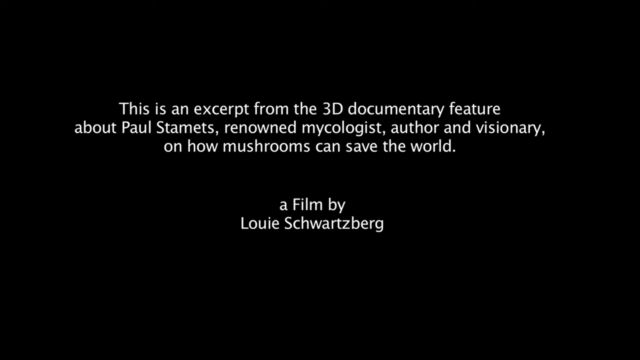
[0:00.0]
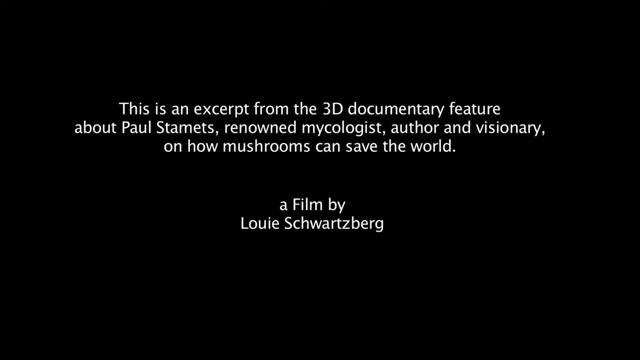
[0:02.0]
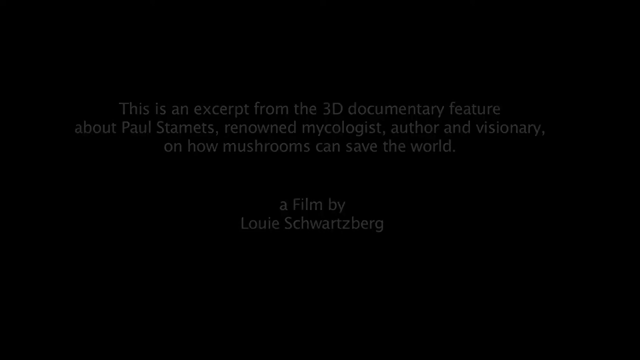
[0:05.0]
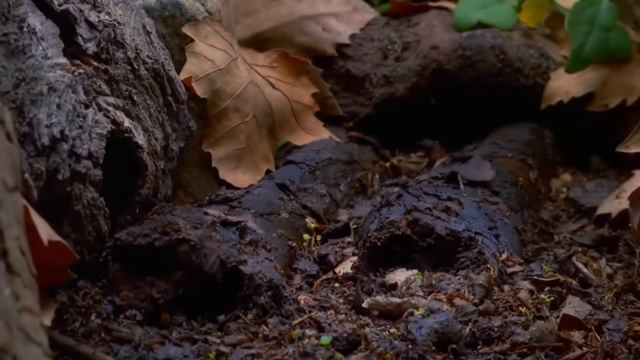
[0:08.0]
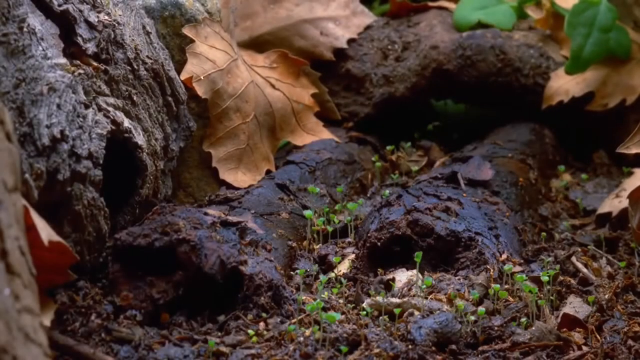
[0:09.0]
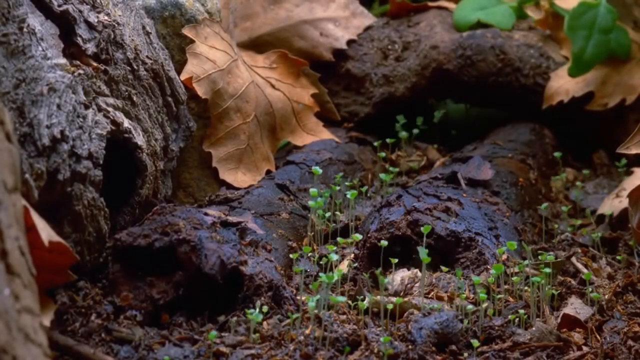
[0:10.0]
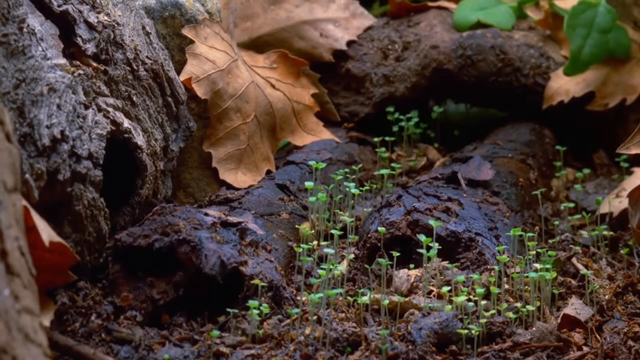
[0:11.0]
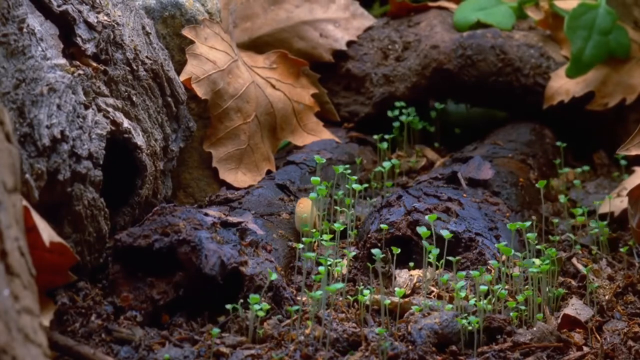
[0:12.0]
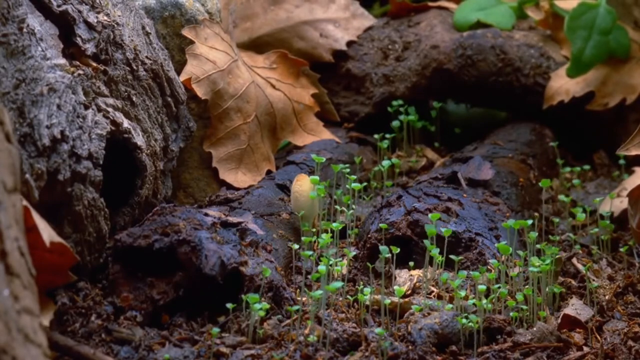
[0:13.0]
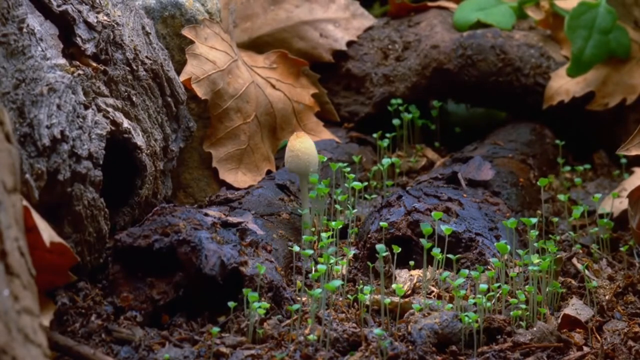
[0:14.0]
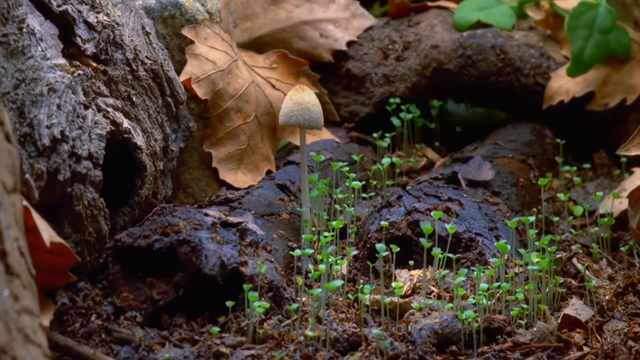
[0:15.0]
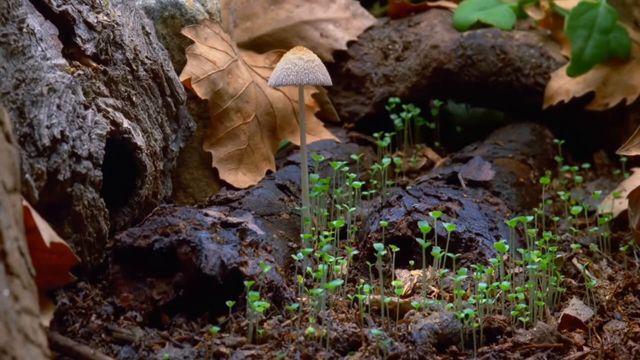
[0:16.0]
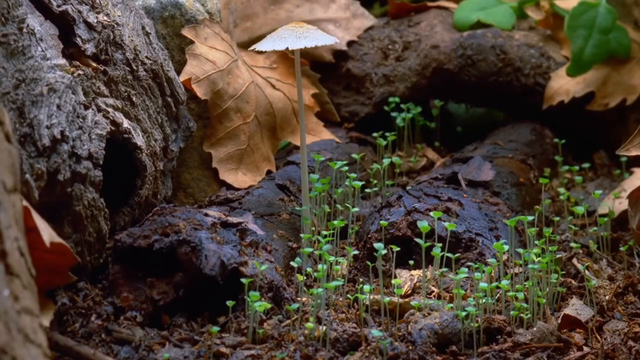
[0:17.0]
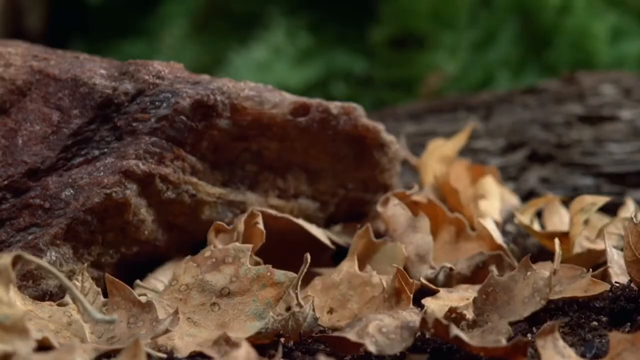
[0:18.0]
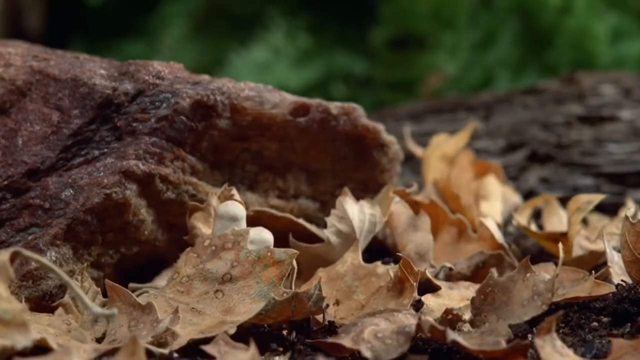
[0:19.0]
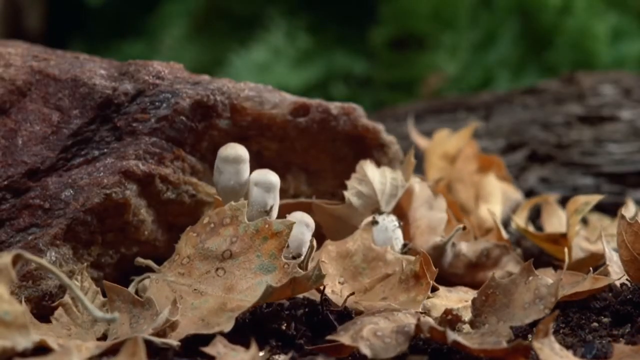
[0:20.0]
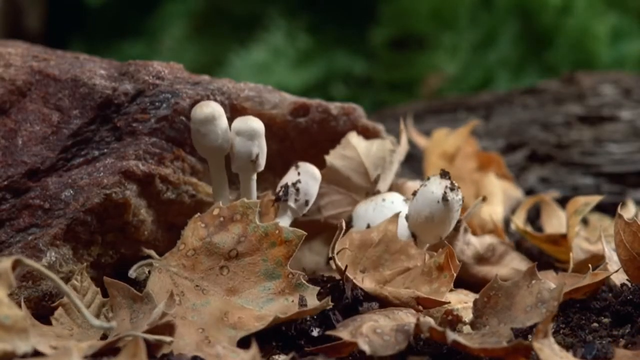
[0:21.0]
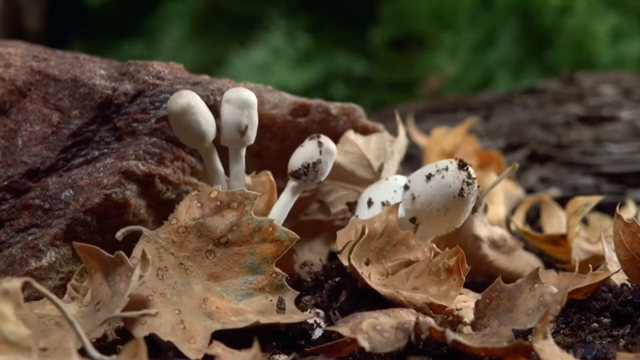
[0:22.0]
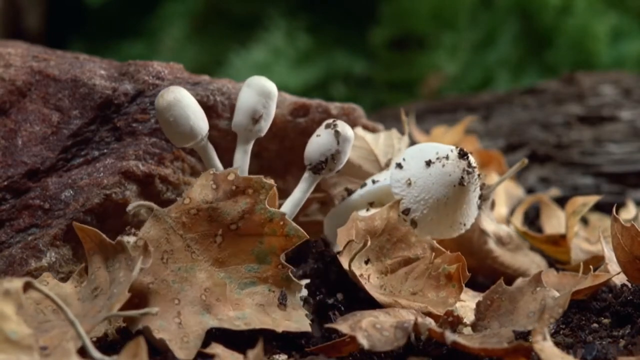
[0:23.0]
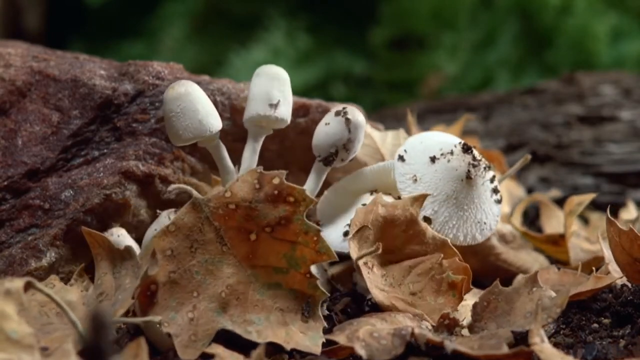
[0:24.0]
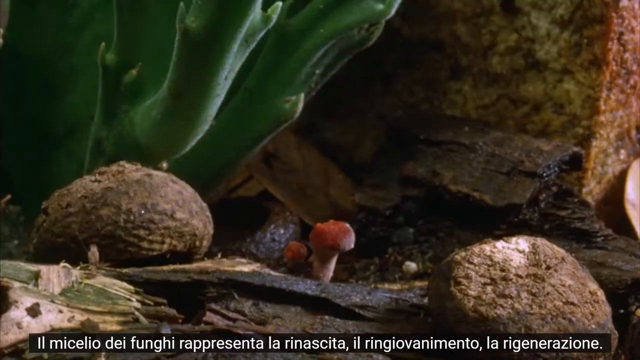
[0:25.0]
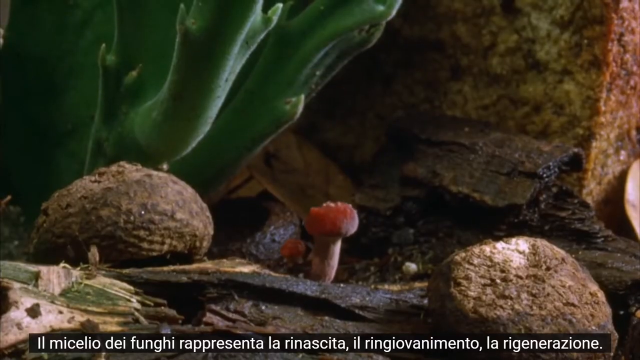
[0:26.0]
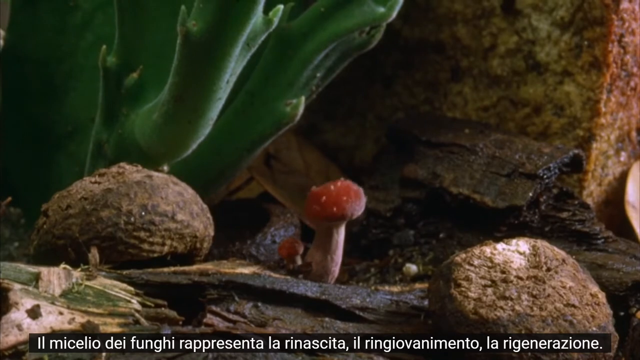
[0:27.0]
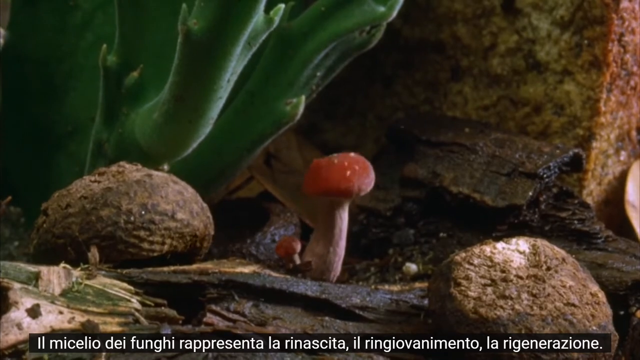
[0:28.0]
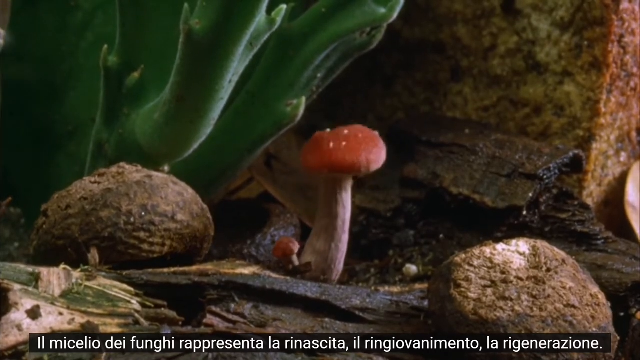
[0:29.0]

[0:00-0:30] The video opens with white text on a black background reading "this is an excerpt from the 3D documentary feature about Paul Stamets, renowned micrologist, author and visionary on how mushrooms can save the world. A film by Louis Schwartzberg." A woodland scene follows with some tree roots and leaves, where 50 or 60 green shoots grow quickly in a sped-up animation. Just to the centre left, a large mushroom grows; it is very narrow with a large head that starts as a dome, rises, flattens, and then opens upwards to resemble a flower. The scene changes to another woodland scene with maybe the root of a tree in the background and leaves in the foreground. The leaves begin to move, the soil moves, and white mushrooms come up from the soil; five mushrooms develop. At first their heads are quite narrow, then they unfold outwards into more of a dome shape and then a flat circular shape. Another forest scene follows, with maybe some rocks on either side of a mushroom that is starting to grow out of what seems to be bark or old wood. There are green leaves behind, and the mushroom's stalk and red head extend upwards and grow as the scene progresses.